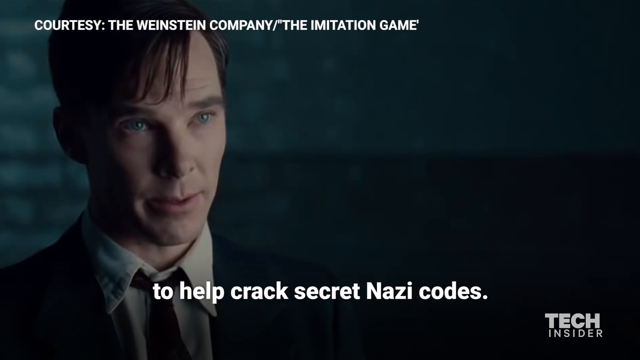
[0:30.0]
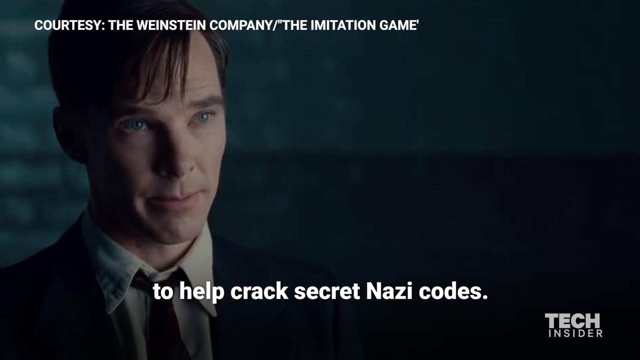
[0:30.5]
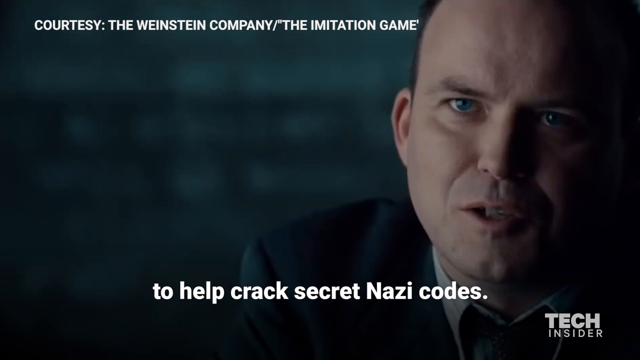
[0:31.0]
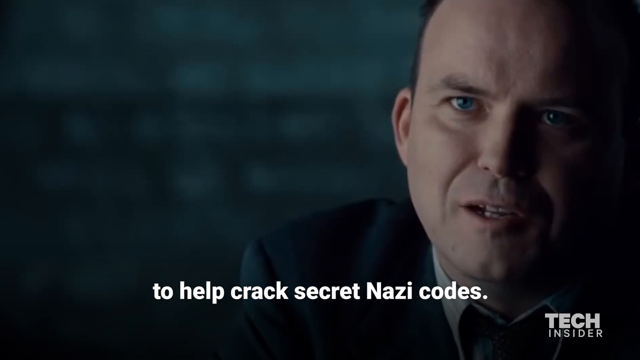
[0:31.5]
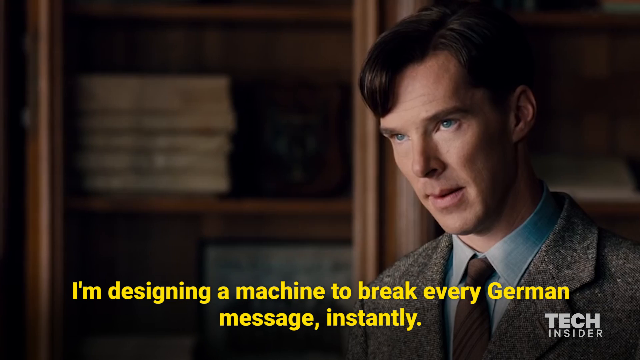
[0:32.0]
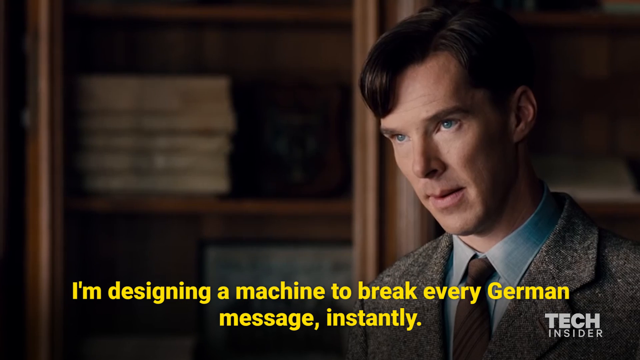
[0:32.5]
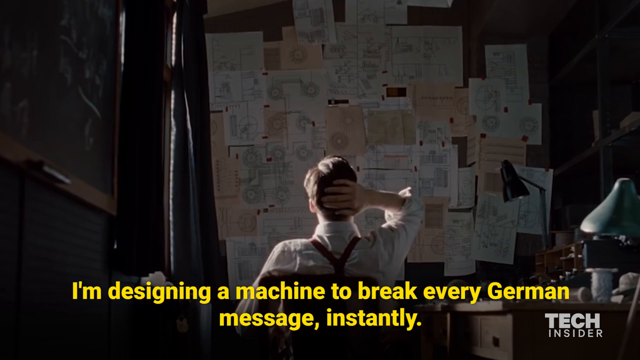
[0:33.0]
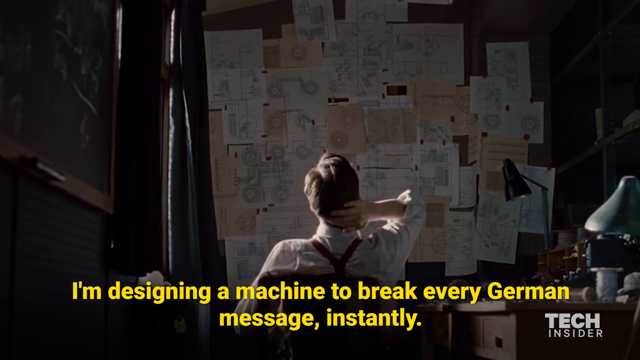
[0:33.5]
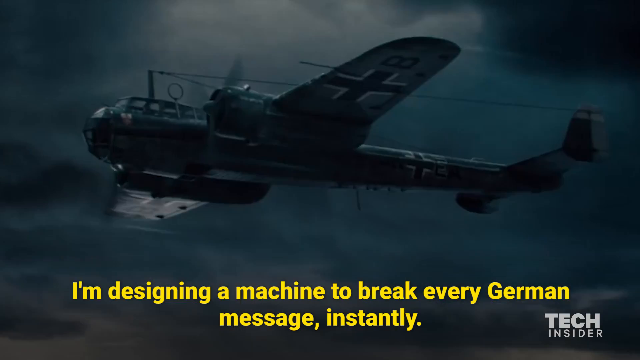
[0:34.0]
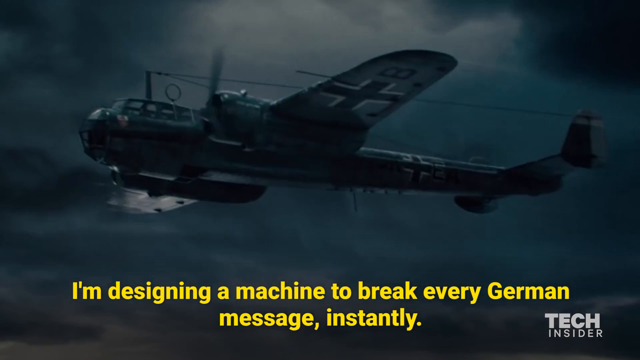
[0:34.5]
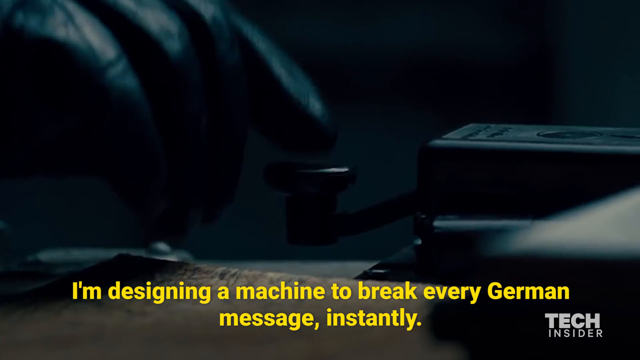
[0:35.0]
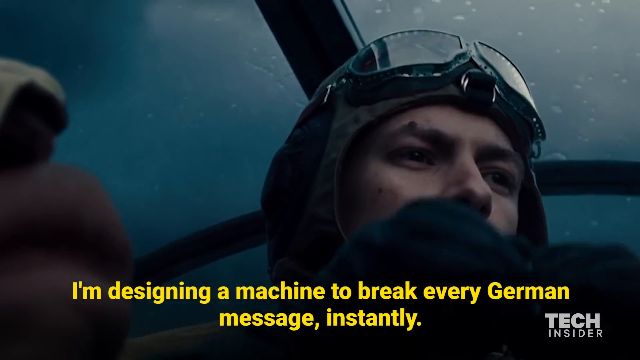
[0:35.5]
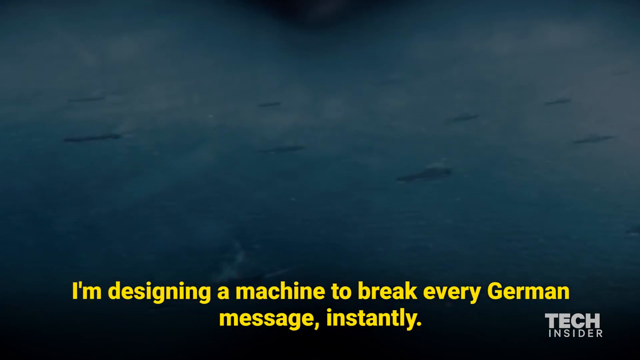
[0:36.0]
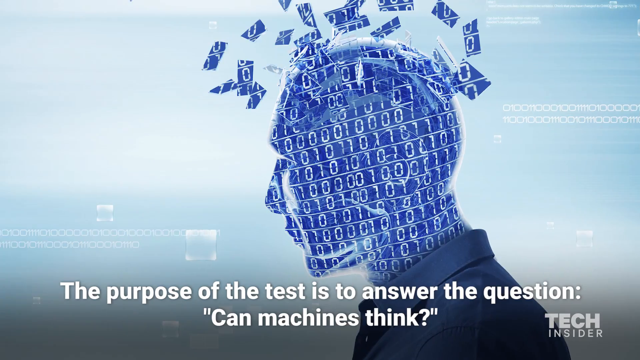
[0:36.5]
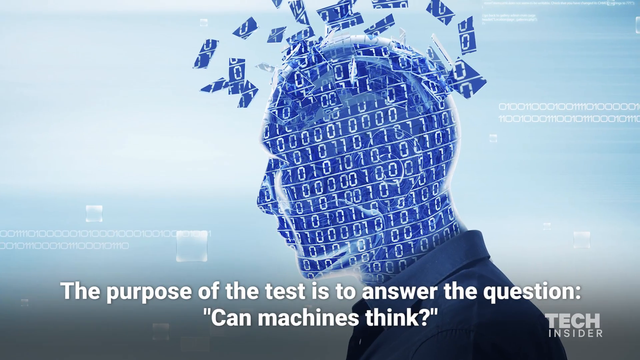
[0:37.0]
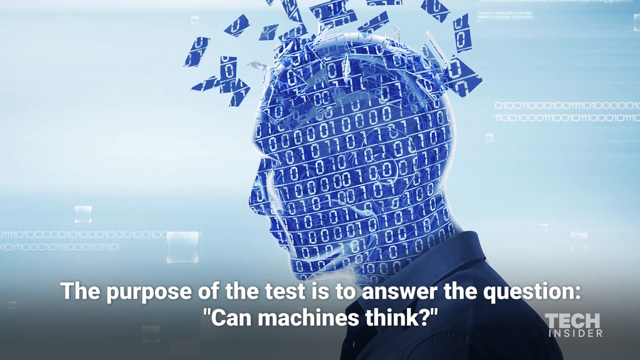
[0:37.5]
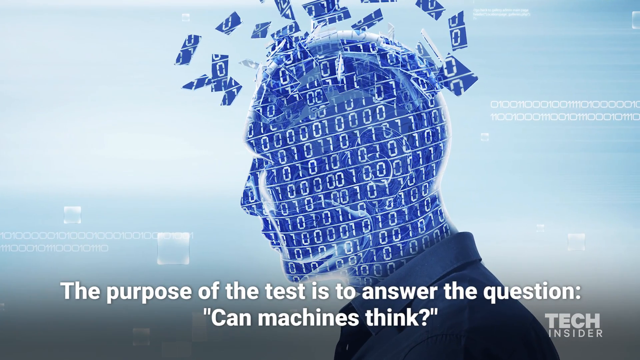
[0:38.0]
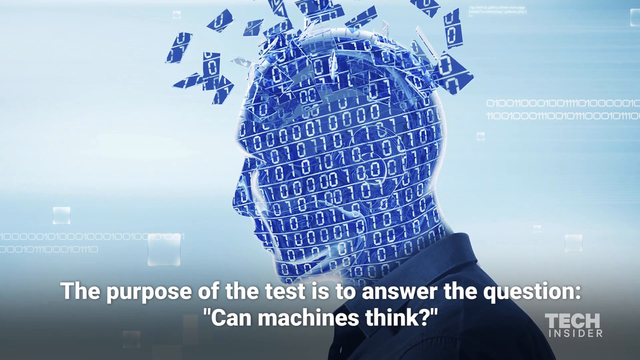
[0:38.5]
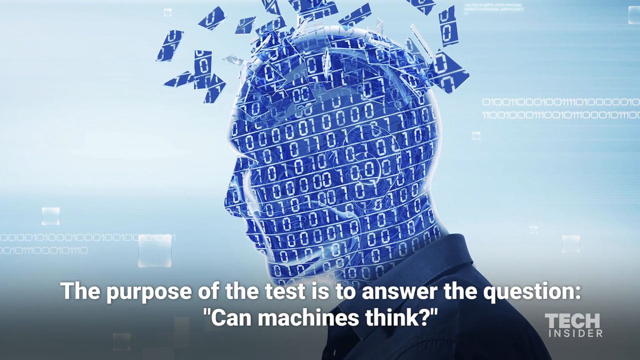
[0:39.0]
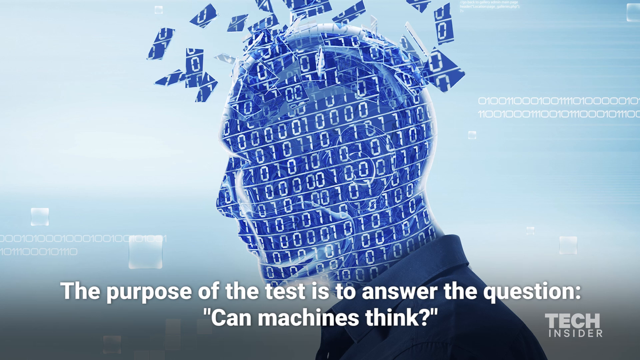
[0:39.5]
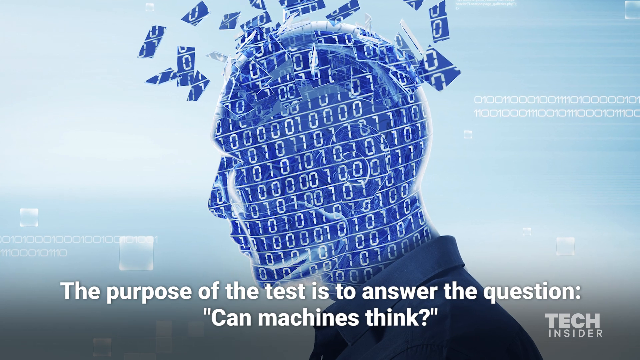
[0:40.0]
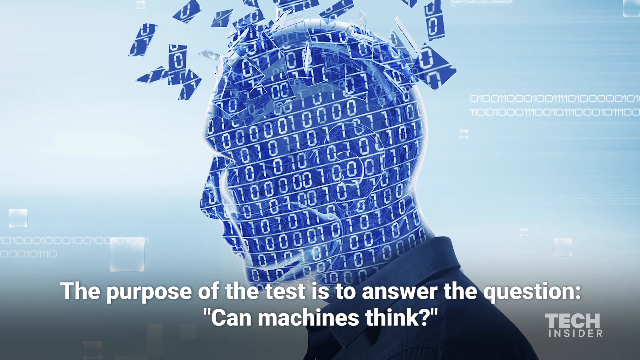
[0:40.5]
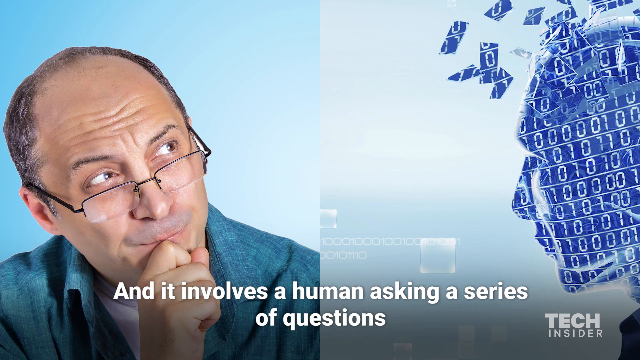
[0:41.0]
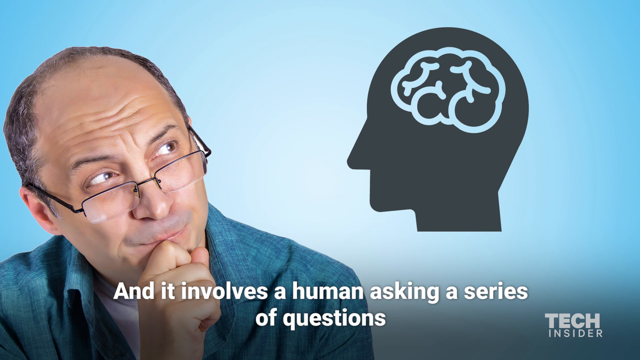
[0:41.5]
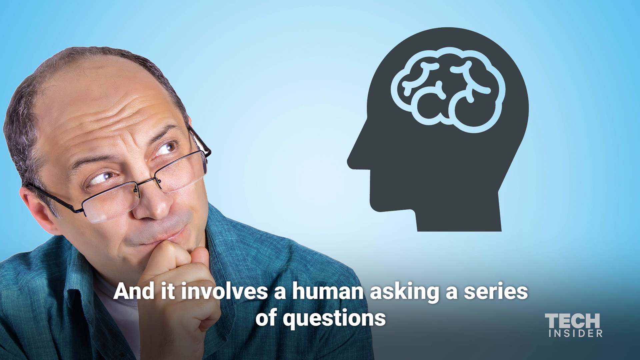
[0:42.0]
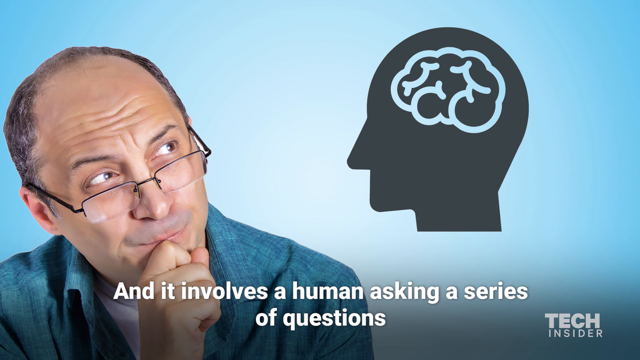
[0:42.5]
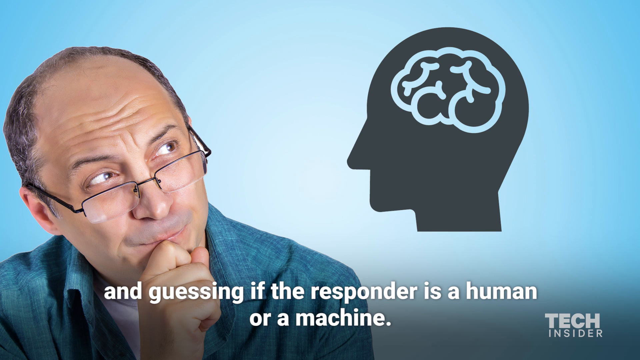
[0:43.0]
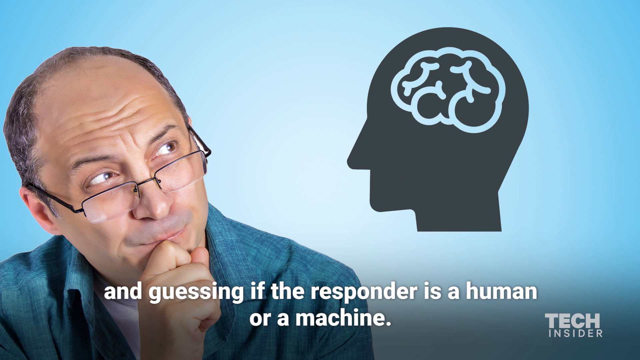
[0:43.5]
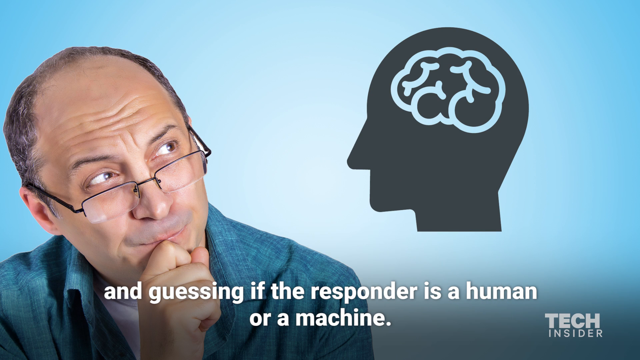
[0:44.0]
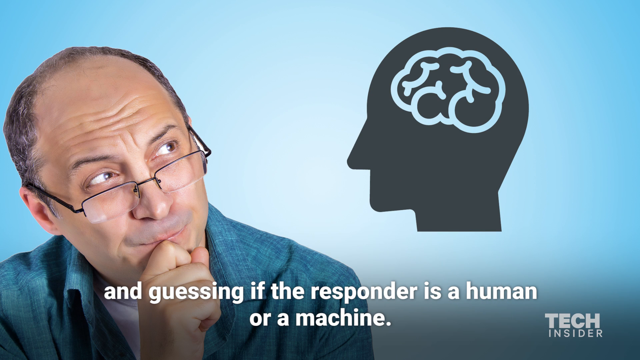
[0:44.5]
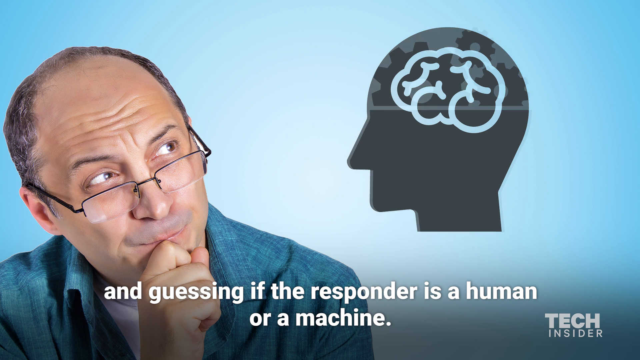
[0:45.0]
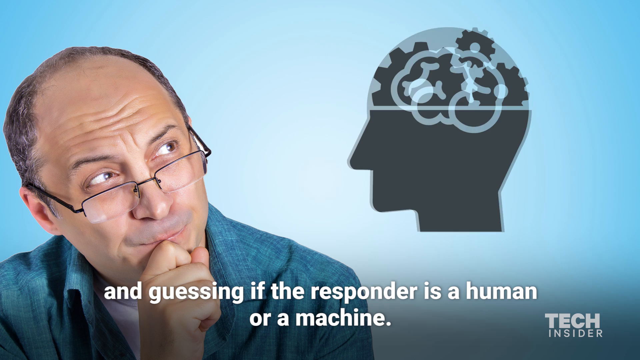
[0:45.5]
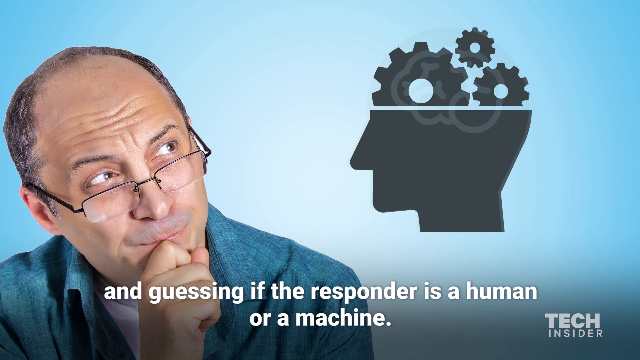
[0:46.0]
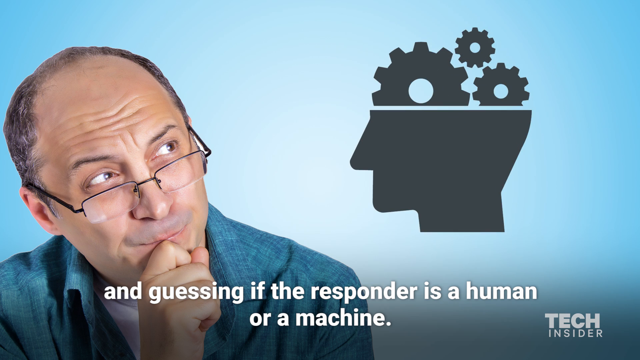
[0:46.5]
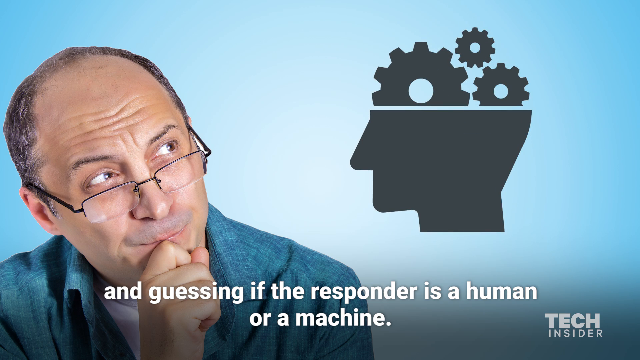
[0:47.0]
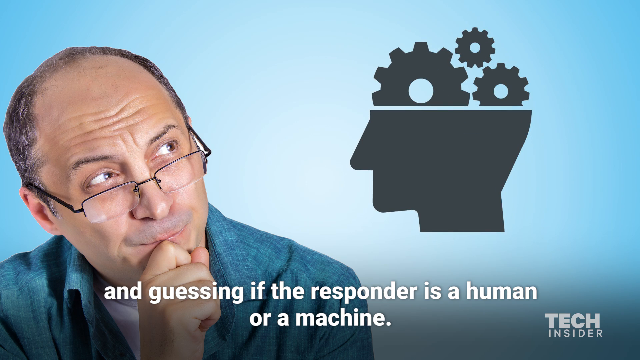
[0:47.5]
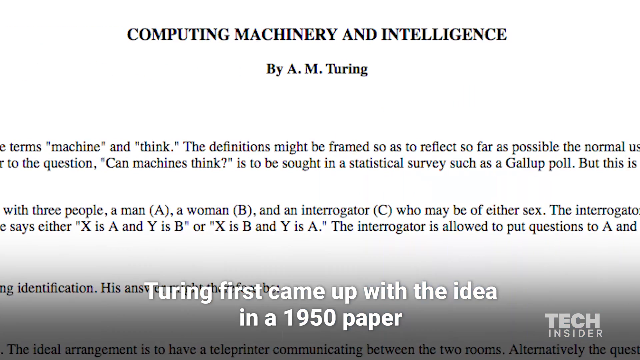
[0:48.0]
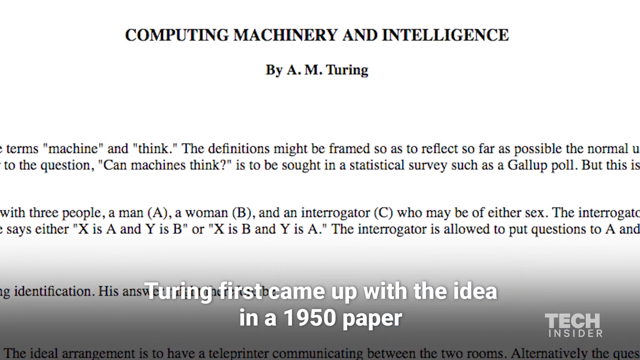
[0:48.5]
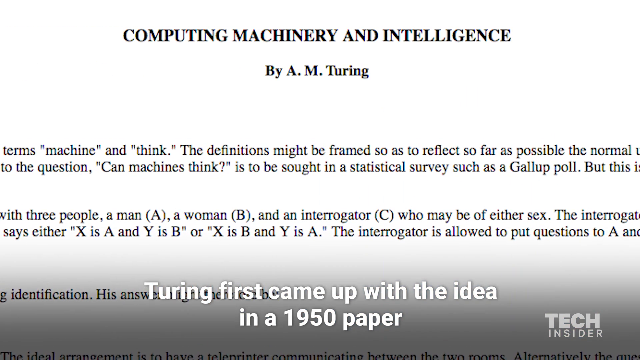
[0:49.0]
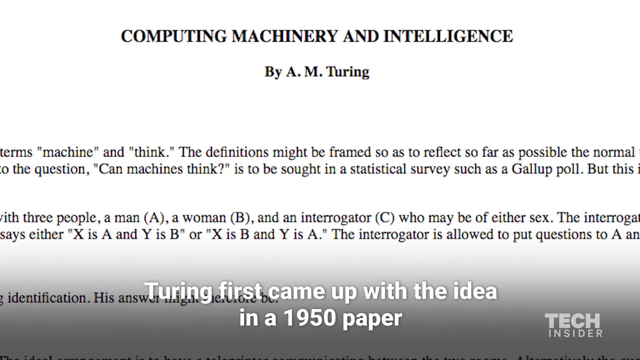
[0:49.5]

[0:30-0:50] Benedict Cumberbatch speaks for about a second, then the view switches back to a closer shot of the balding man on the right, speaking kind of menacingly. The scene instantly shifts to Benedict Cumberbatch as Alan Turing on the right, wearing a tweed suit with a blue shirt and brown tie, his hair parted; behind him is a pretty blurry cabinet with stacks of books and a couple of photos. The yellow subtitle says "I'm designing a machine to break every German message instantly". It cuts to another scene of Benedict Cumberbatch in a white shirt with suspenders, in front of a wall covered in various papers with many technical diagrams. It switches to a World War II-era helicopter plane, then to a gloved hand pressing a button inside the plane, then to the face of the pilot in the cockpit wearing an aviator's helmet. A slide from the left covers that scene, showing a male humanoid wrapped in blue lines of ones and zeros; the top of his head is kind of shattering, with ones and zeros coming out in an explosion. It wears a dark blue shirt and is in front of a pale blue background with vague one-and-zero patterns. The subtitle says "the purpose of the test is to answer the question, can machines think?" and the view zooms in on the humanoid for a moment. Next is an image of a balding man in a woven blue shirt, shown from the shoulders up, wearing glasses, looking to the upper right in kind of a thinking pose, along with a profile picture of a human head with a stylized symbol of a human brain inside it. The subtitle says "and it involves a human asking a series of questions, and guessing if the responder is a human or a machine." The top half of the profile head transforms into something like a gear pattern. A paper by Alan Turing titled "Computing Machinery and Intelligence" slides in from the left, and the subtitle changes to "Alan Turing first came up with the idea in a 1950 paper."